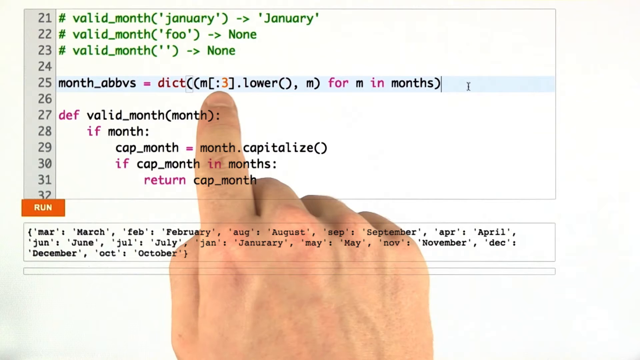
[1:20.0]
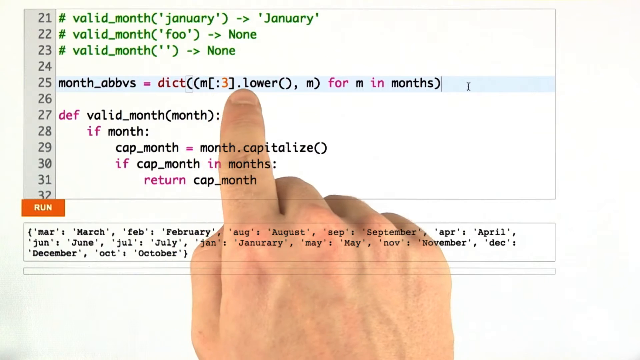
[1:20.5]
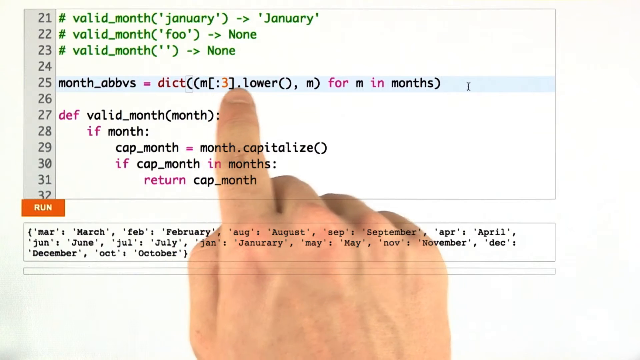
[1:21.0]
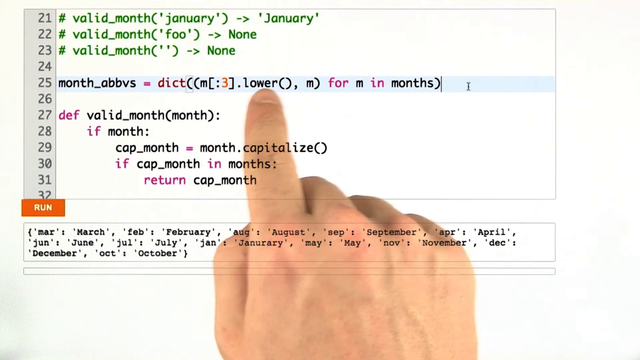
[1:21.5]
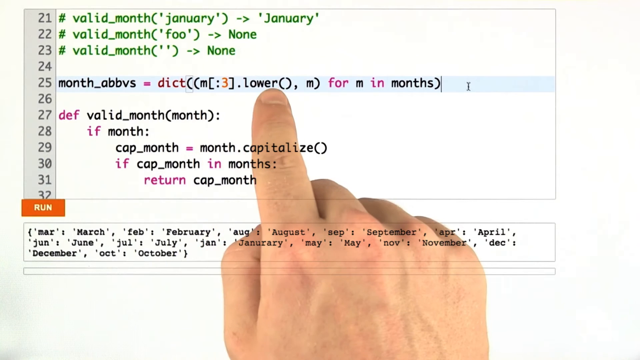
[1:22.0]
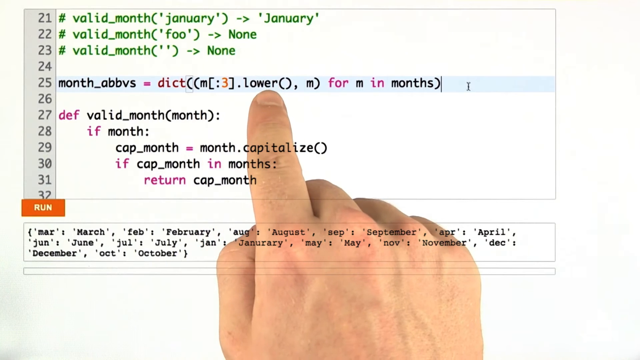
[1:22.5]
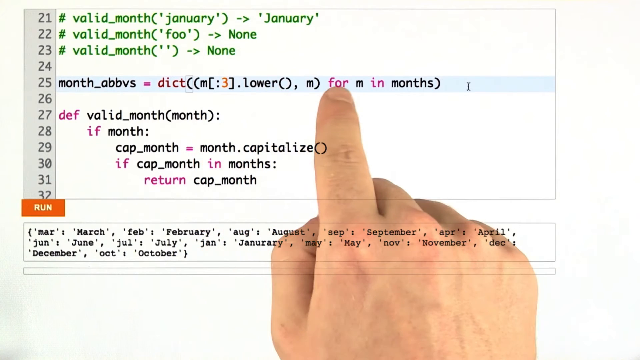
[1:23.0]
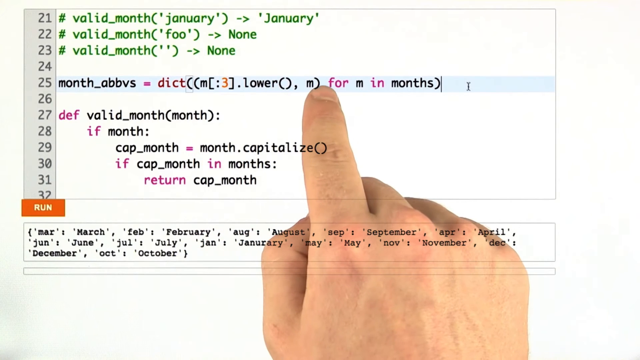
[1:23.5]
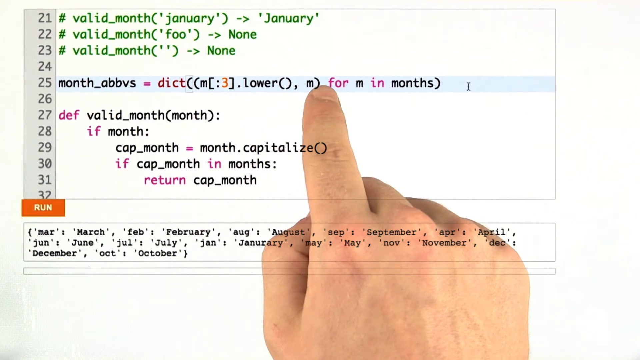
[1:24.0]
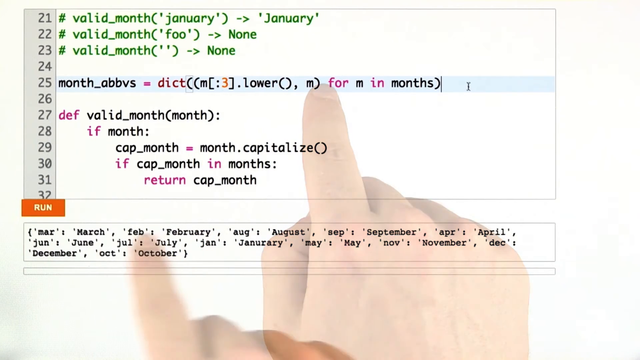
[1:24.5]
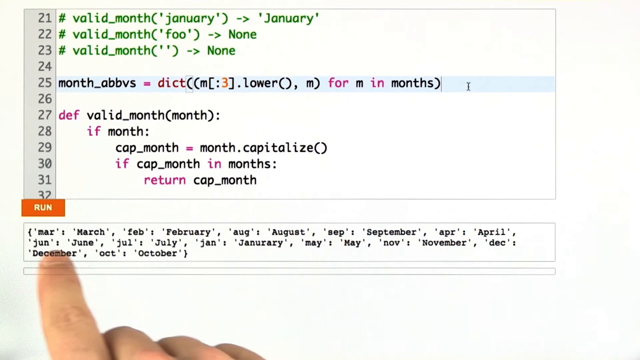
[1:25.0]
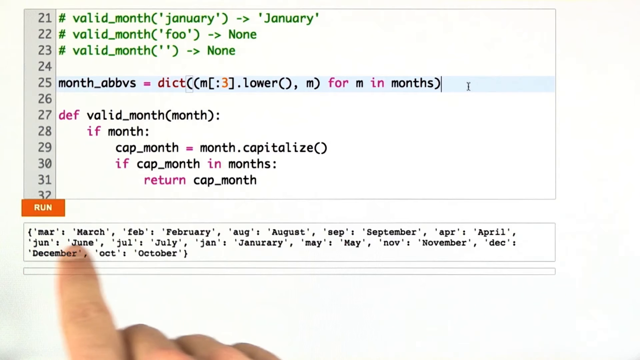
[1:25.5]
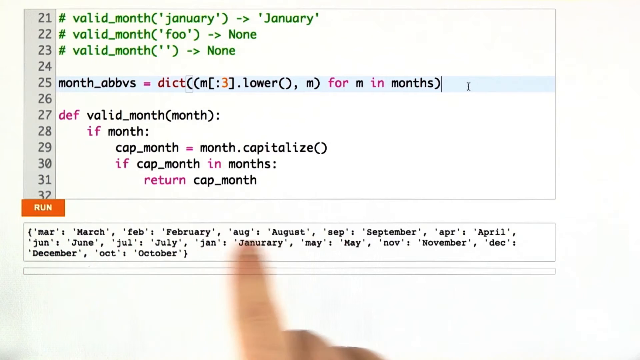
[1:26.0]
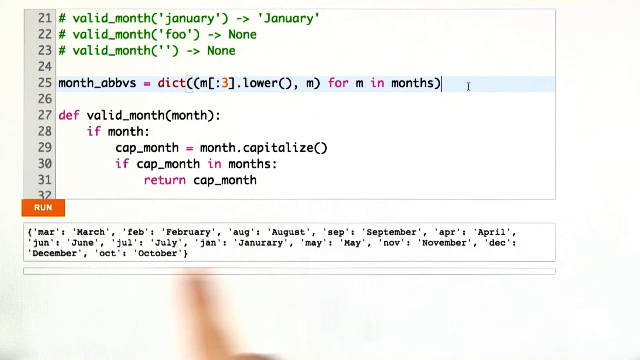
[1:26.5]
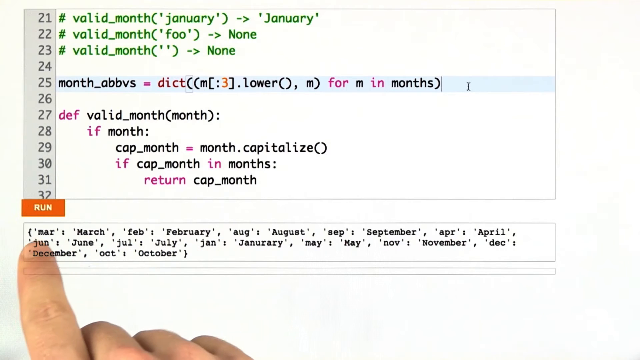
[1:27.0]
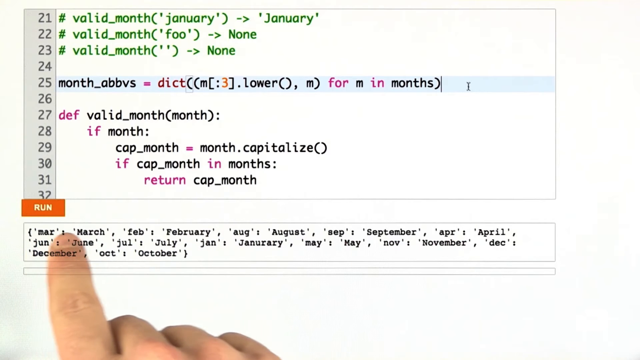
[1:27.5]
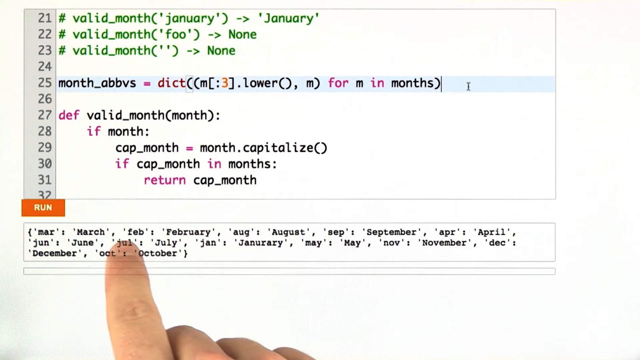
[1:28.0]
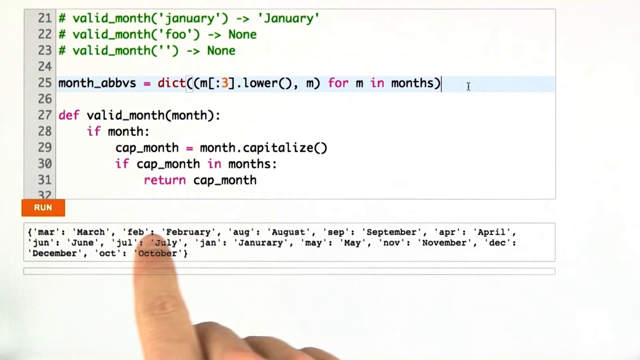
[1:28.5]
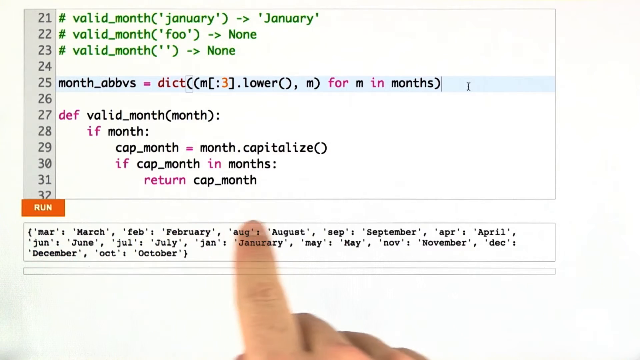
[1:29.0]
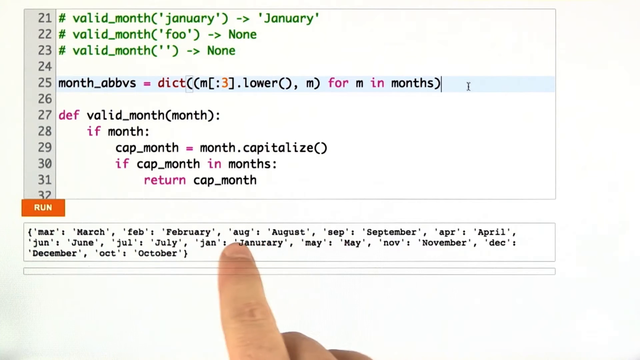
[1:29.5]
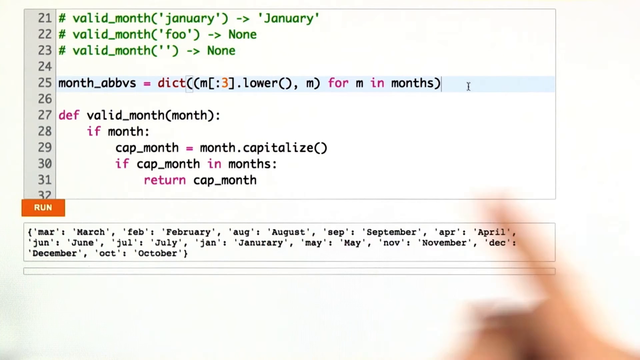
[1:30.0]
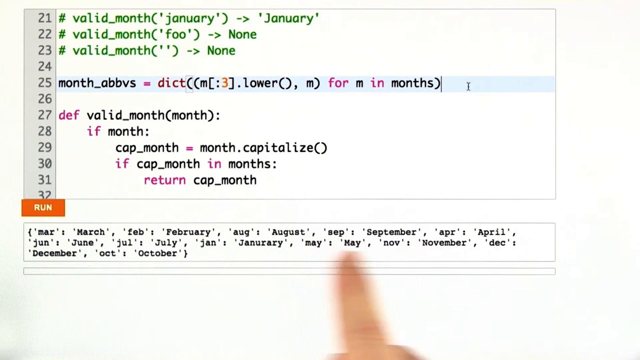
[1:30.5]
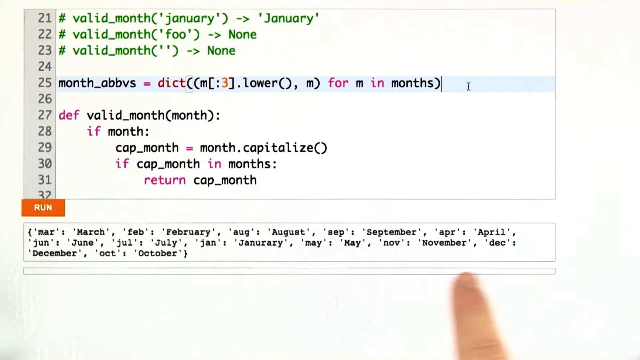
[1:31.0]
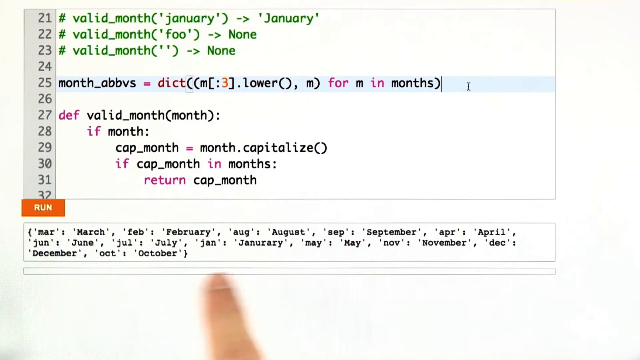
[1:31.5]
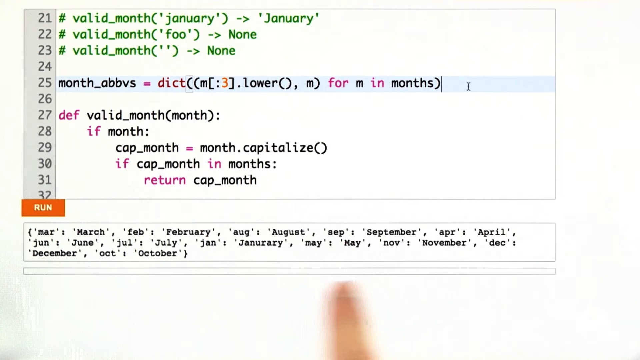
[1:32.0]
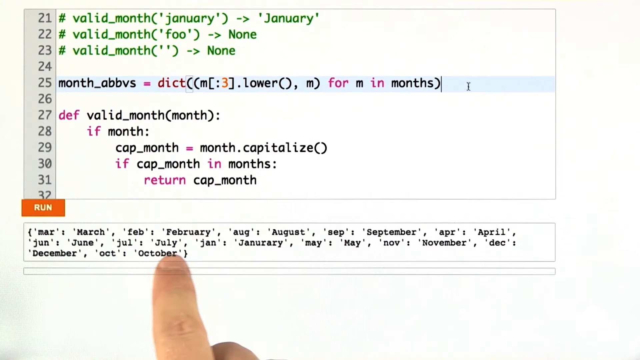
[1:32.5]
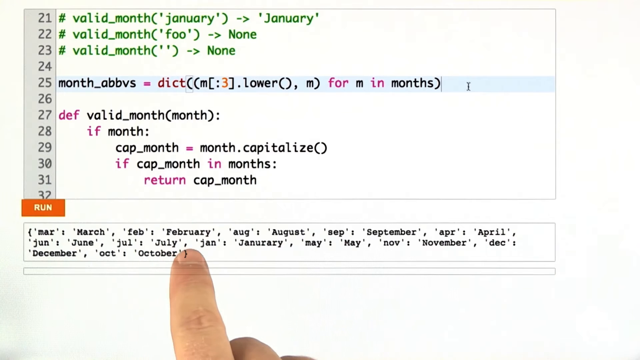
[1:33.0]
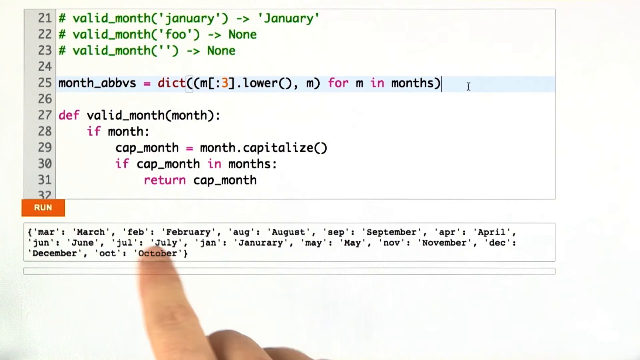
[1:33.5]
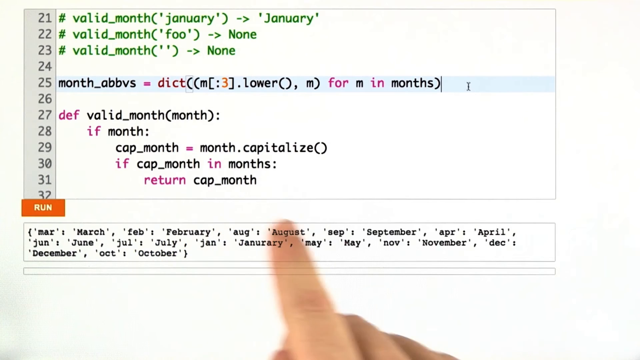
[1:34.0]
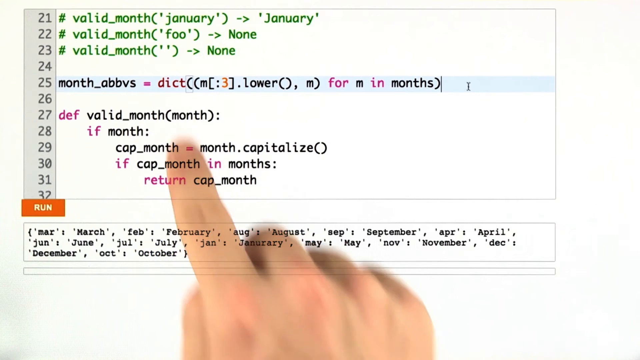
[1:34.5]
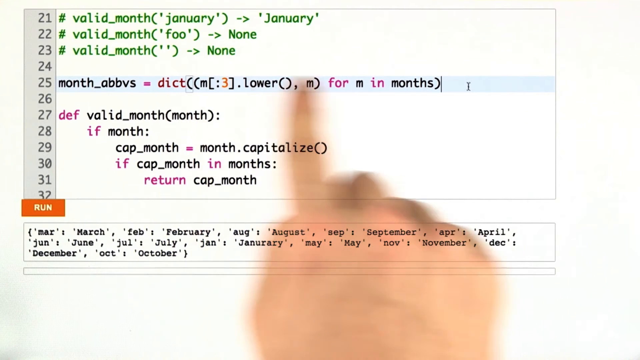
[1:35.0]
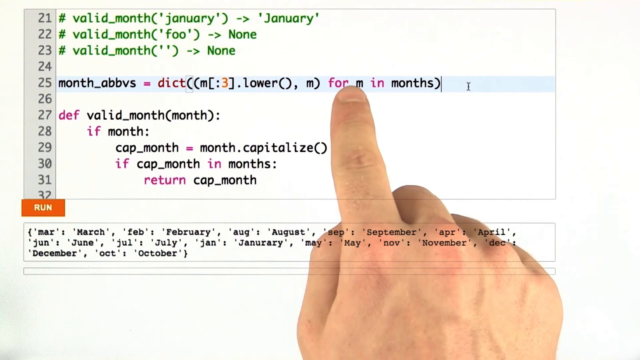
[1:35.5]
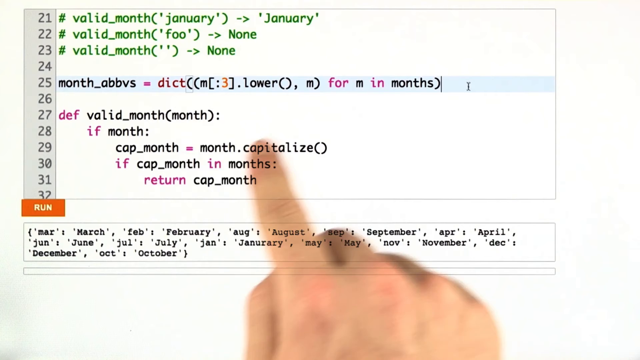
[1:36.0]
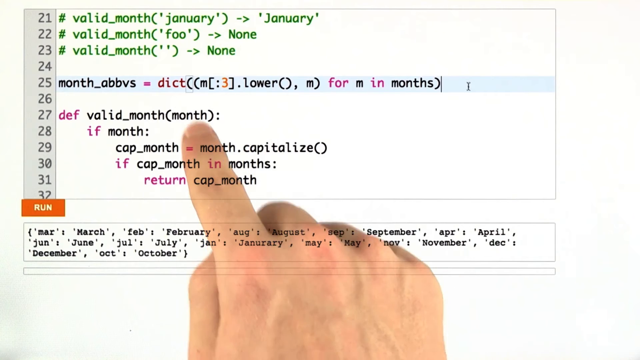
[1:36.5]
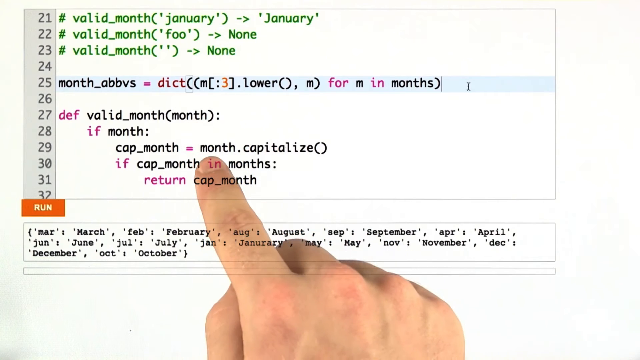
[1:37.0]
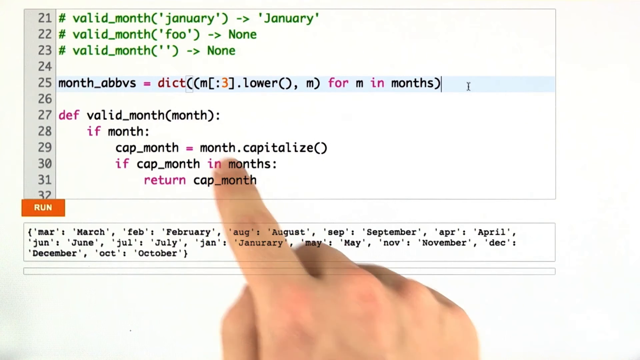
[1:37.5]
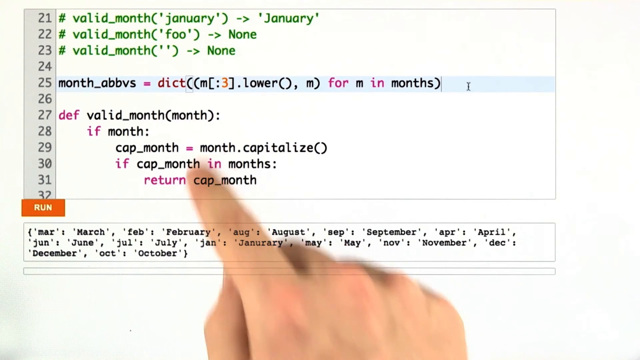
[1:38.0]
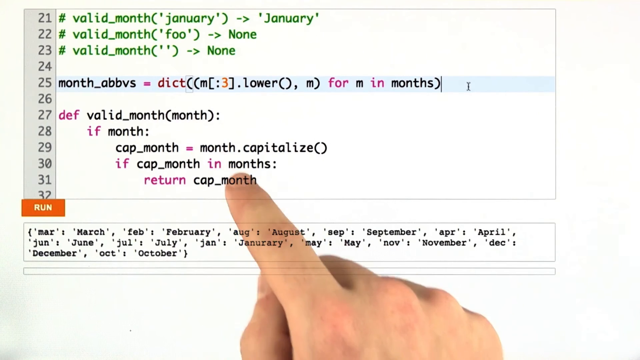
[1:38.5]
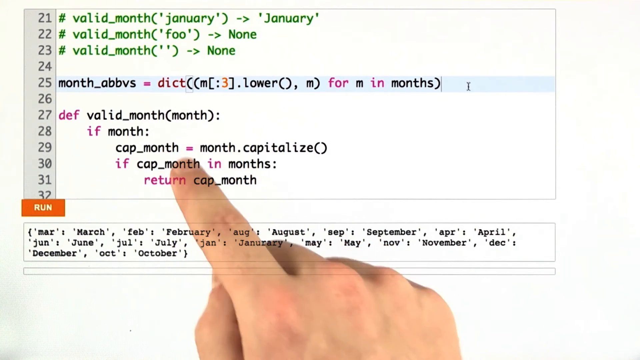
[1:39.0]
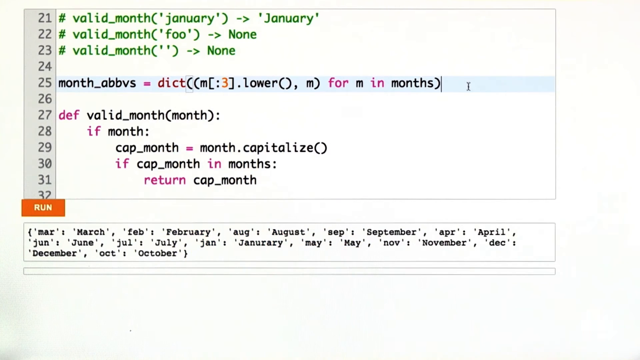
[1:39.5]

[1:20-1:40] A human hand holds a black digital pen over programming that appears to concern the months of the year and when to capitalize them. The pen hovers over the lettering. Line 21 is green with "valid month January"; line 22 is "valid month foo" with "none"; line 23 is green with "valid month" and quotation marks. The pen moves down to line 25, where "def" is in pink, followed by "valid month", and a line with "cap month" equals "capitalize." The months are listed in purple, starting with January and running through November. The hand with the pen goes down to a light blue line at the bottom where the command "print valid month" is written, and the pen keeps hovering over the words until the command to print is given. The pen is then put down, and the hand points with the index finger, hovering over different commands.